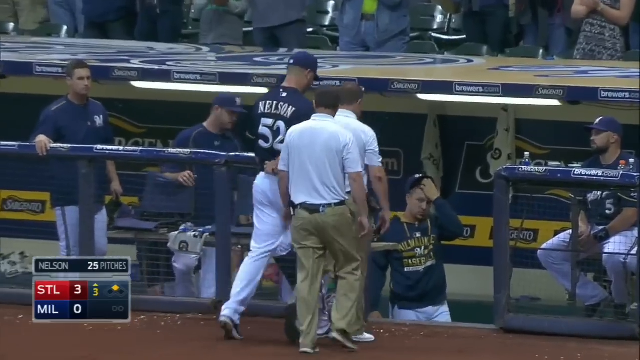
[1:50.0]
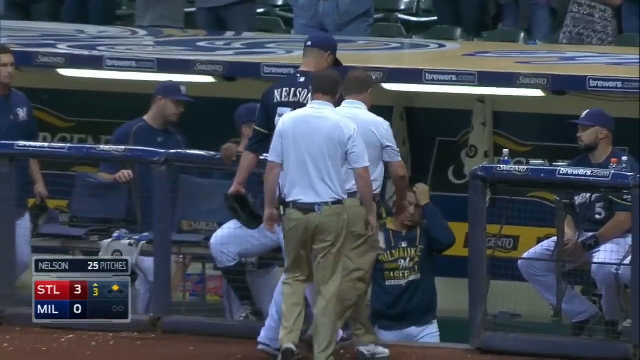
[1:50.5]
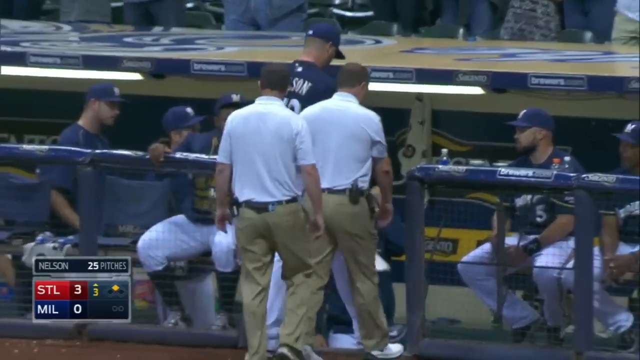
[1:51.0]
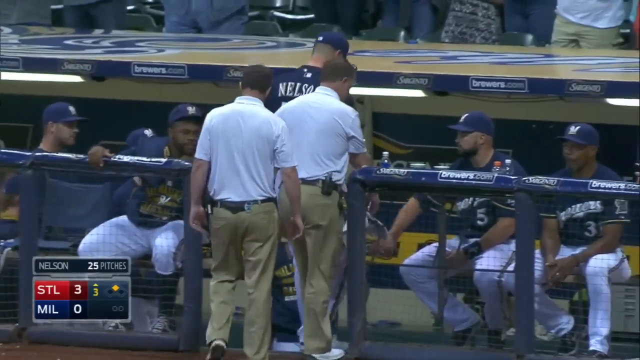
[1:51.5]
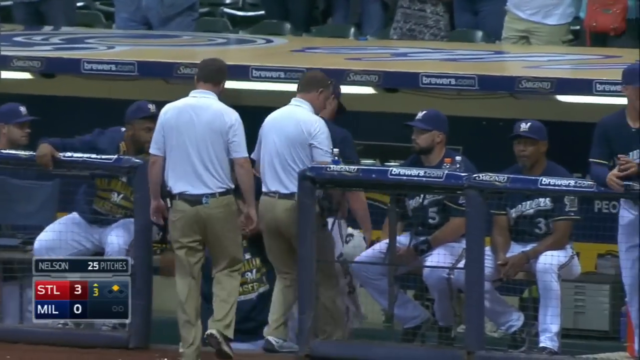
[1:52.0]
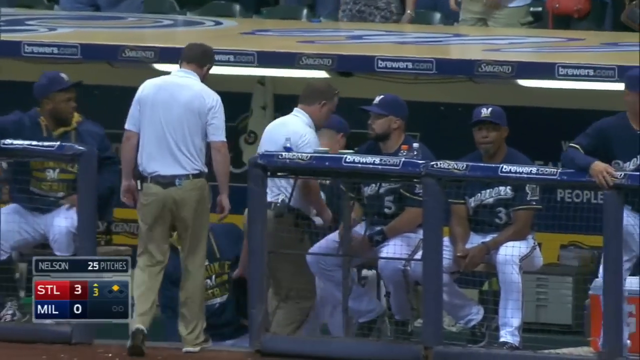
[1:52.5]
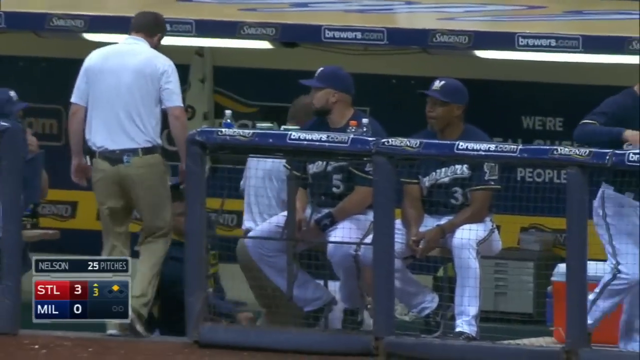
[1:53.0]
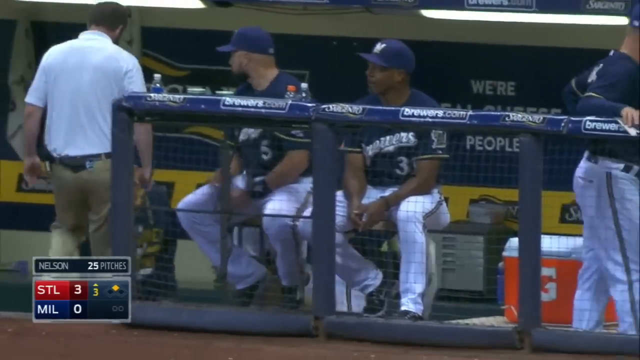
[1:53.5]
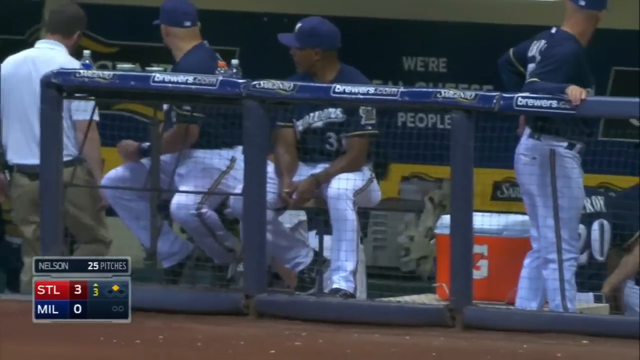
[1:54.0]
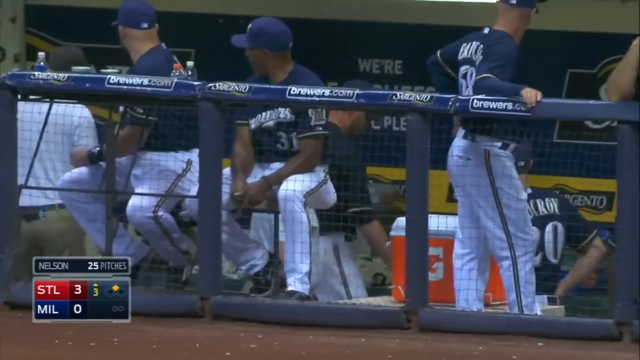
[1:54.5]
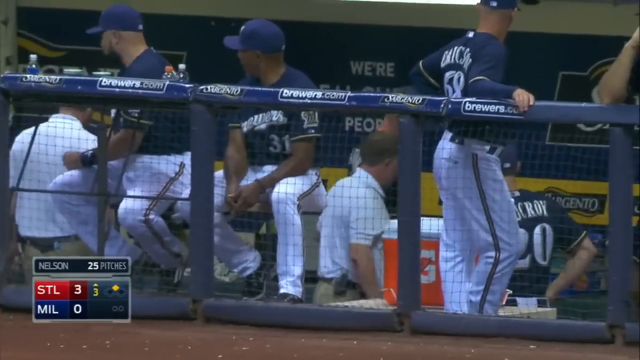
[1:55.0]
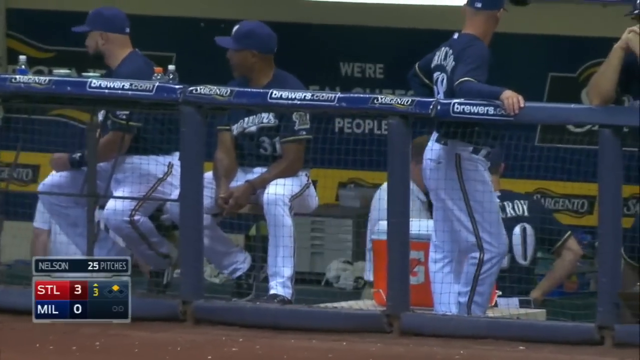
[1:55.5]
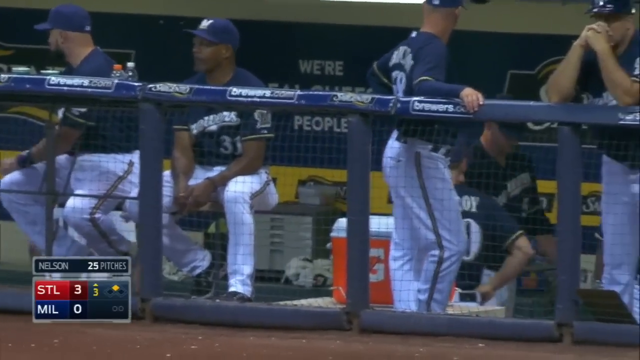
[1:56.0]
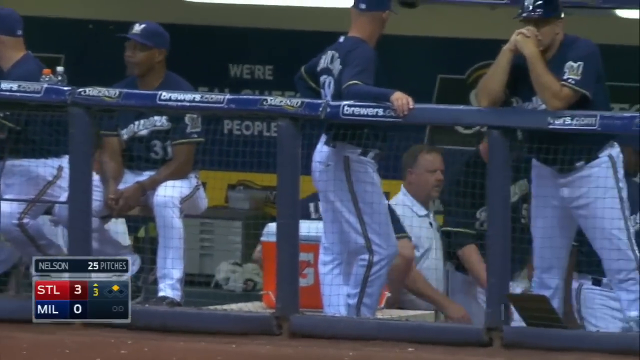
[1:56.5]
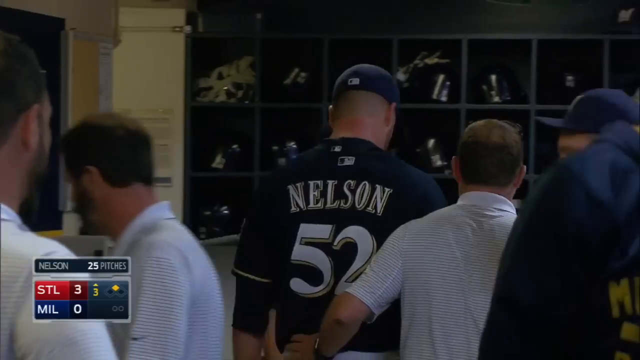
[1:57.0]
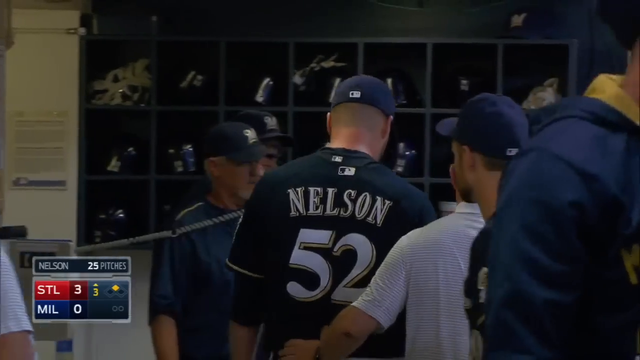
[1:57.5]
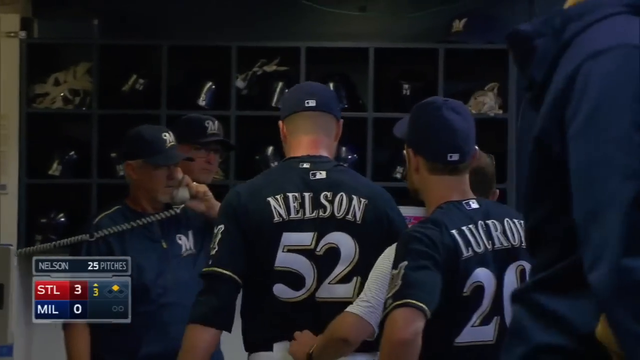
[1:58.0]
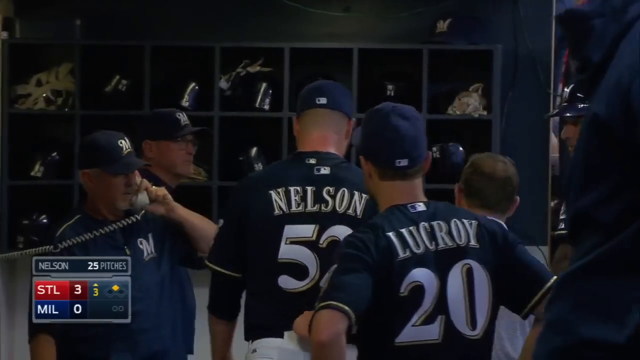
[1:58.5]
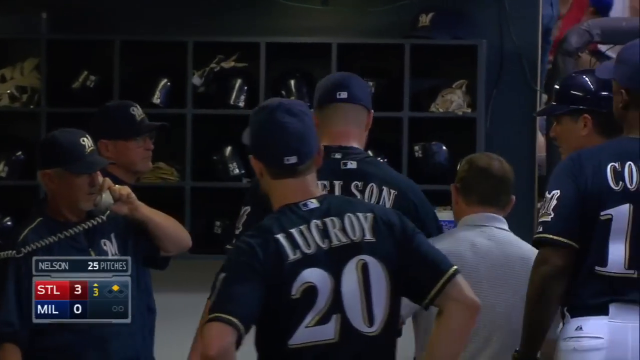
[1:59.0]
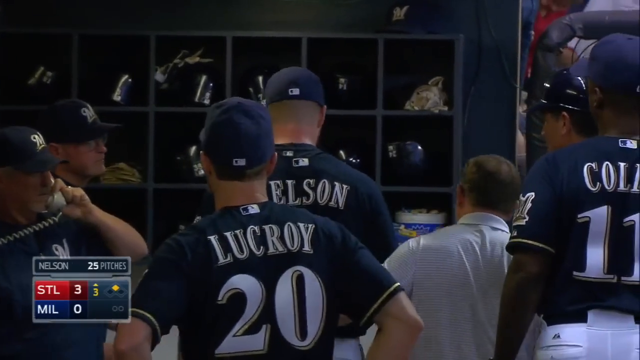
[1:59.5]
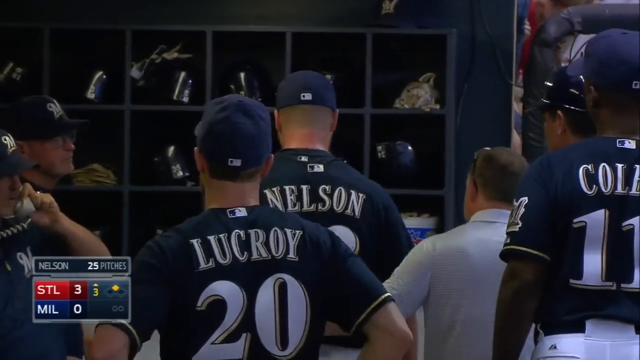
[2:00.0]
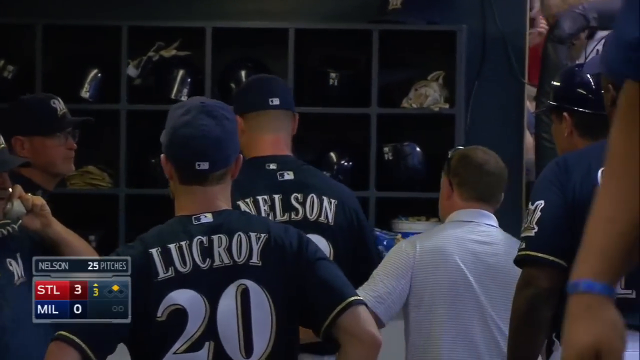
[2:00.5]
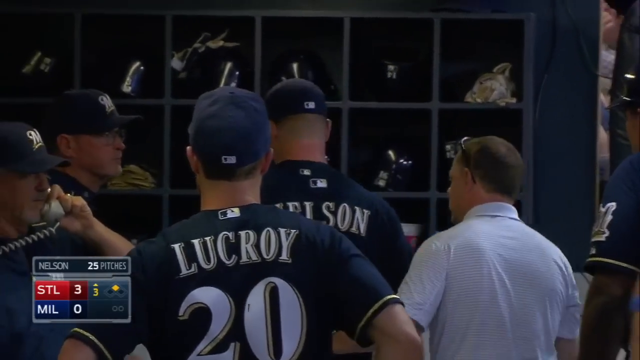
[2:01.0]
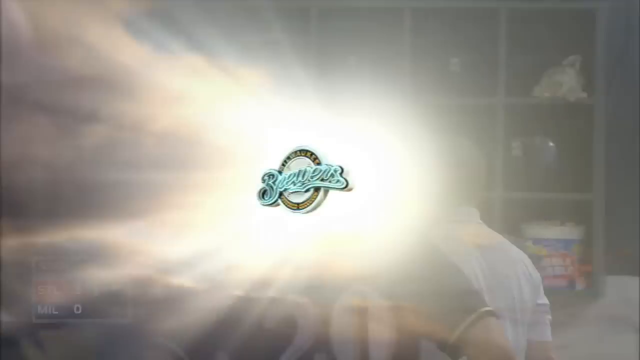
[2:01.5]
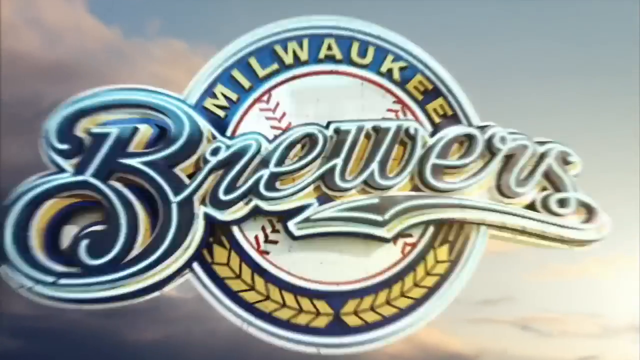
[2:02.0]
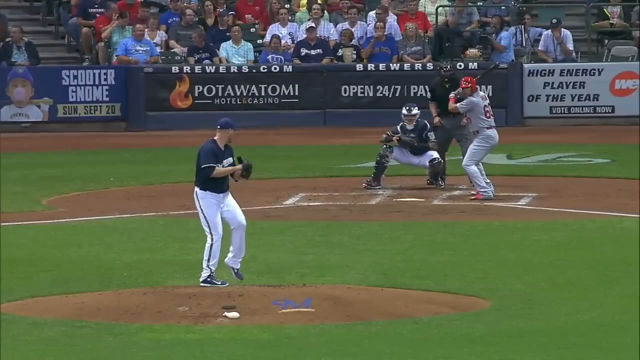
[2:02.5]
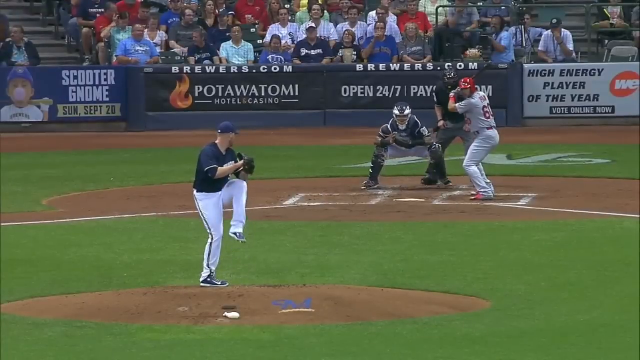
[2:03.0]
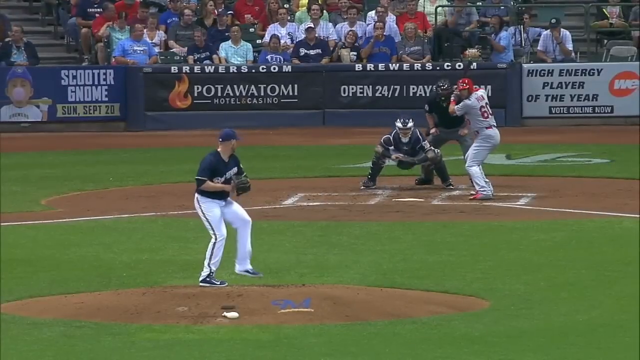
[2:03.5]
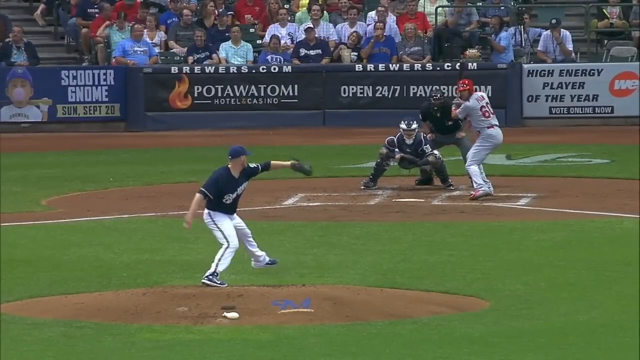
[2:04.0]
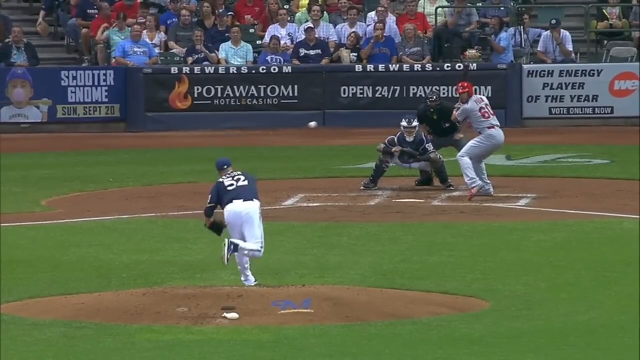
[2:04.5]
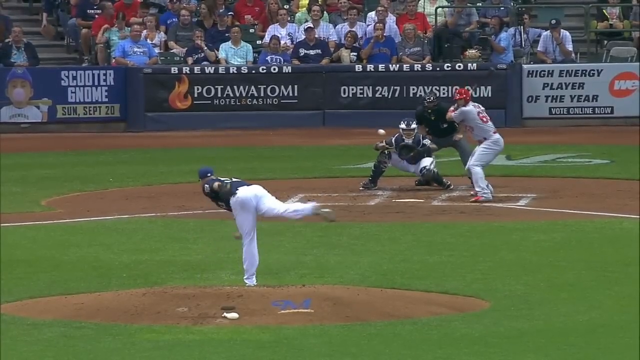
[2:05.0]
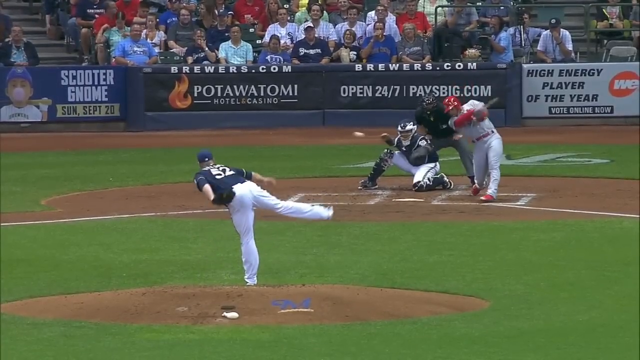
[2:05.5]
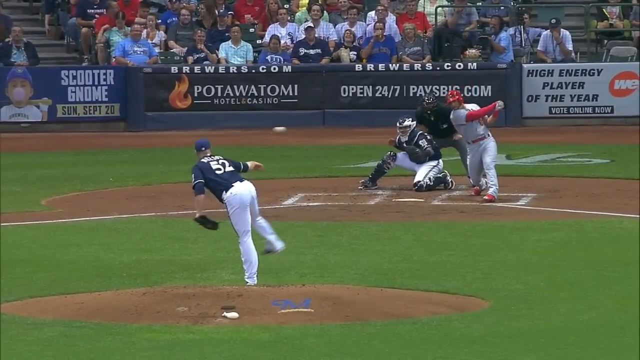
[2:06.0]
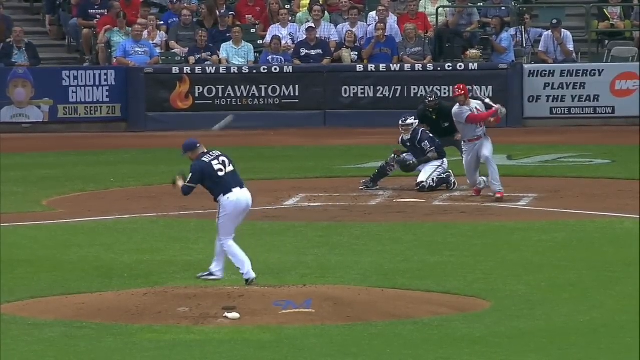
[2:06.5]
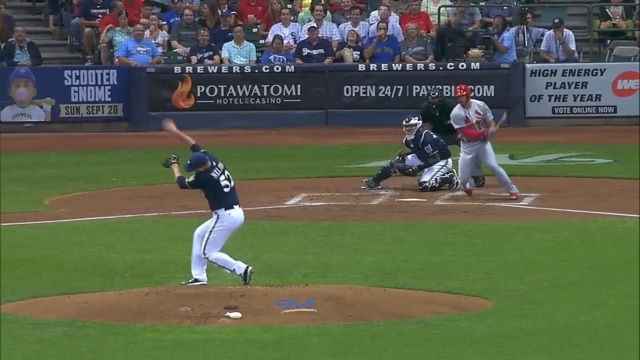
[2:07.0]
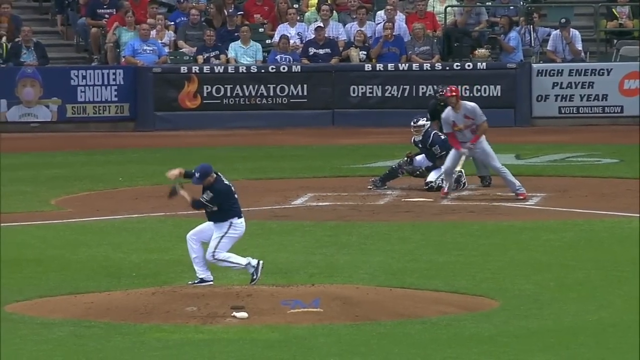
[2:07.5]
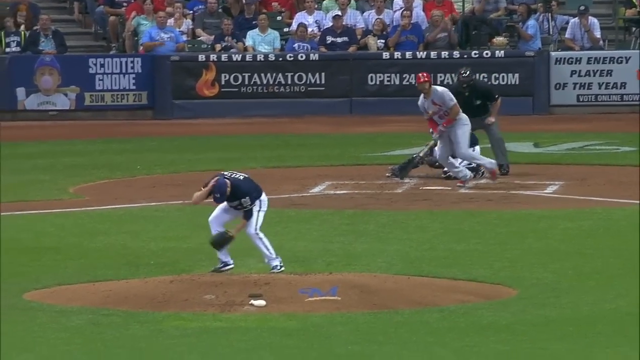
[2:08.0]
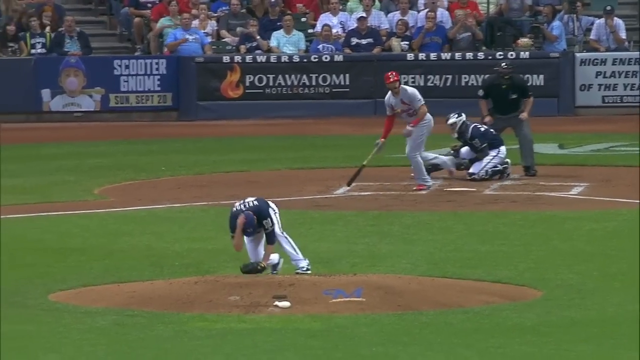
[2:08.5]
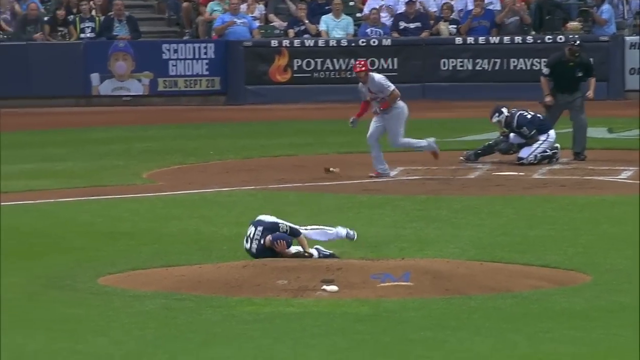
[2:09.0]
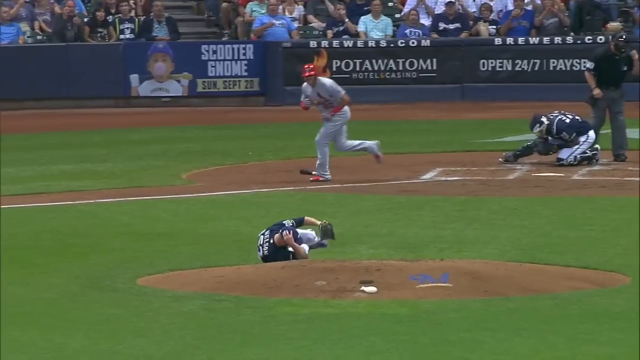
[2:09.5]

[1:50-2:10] Milwaukee pitcher Nelson, number 52, is led into the dugout by two trainers, and the players in the dugout give him a lot of room. He walks unassisted down the several steps of the dugout, though the trainer on his right keeps a hand on him as he leads him to the door on the right side of the dugout. A slow-motion replay of the pitch follows: a curveball down the middle is hit as a line drive right back at Nelson, striking him on the right side of his head, and he immediately collapses to the ground.